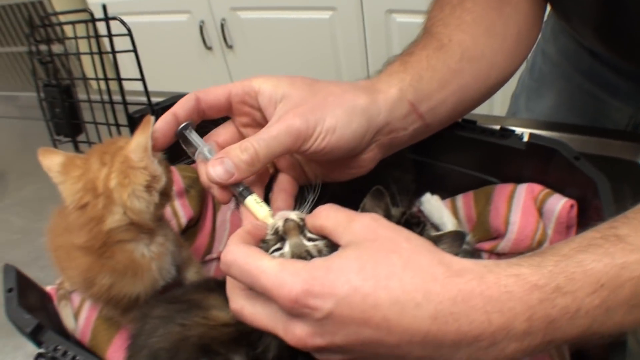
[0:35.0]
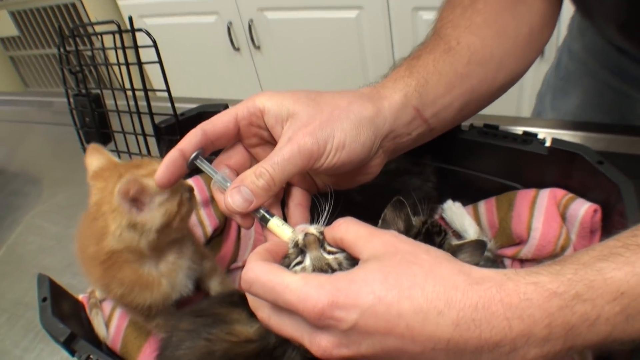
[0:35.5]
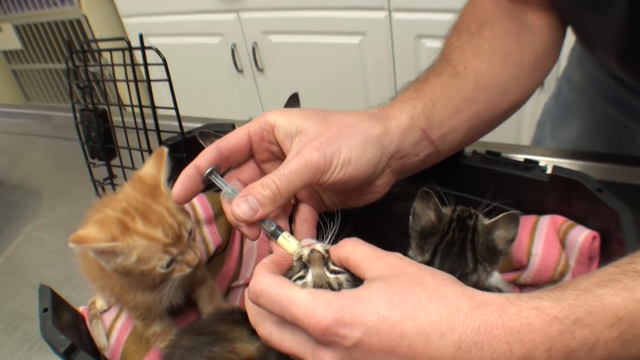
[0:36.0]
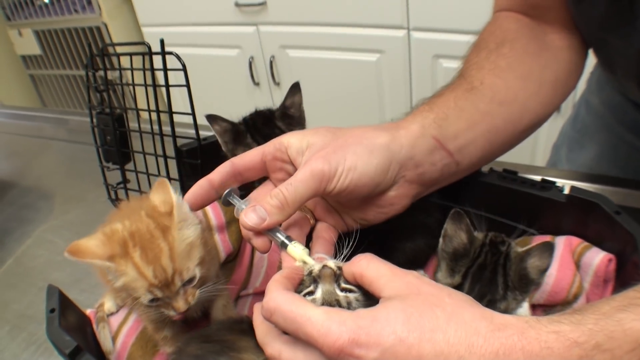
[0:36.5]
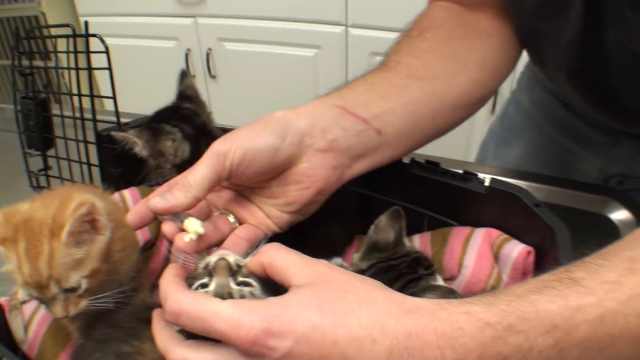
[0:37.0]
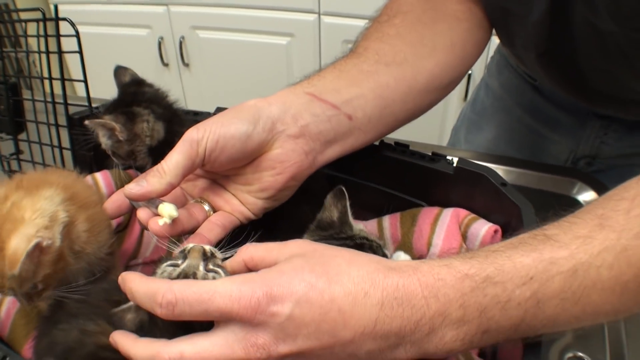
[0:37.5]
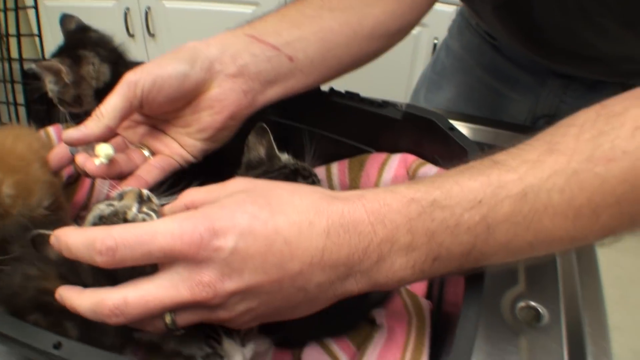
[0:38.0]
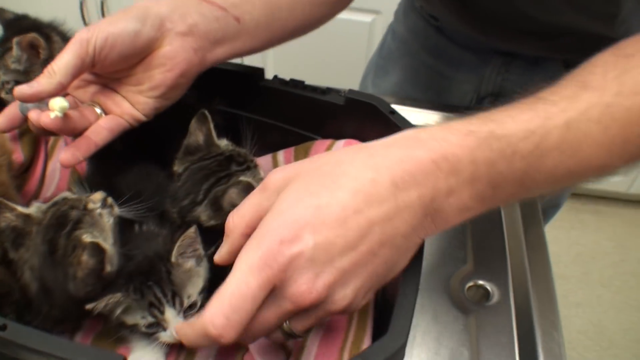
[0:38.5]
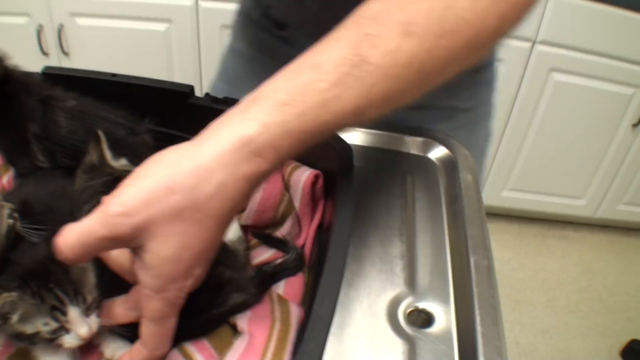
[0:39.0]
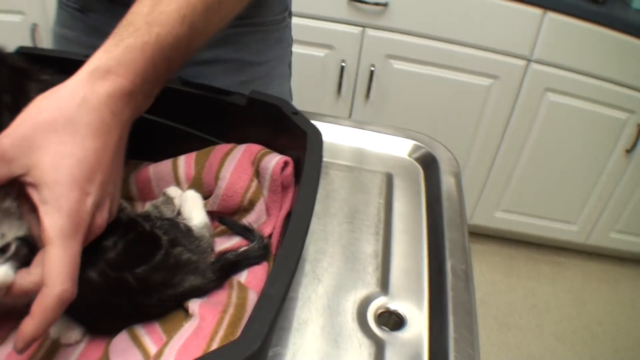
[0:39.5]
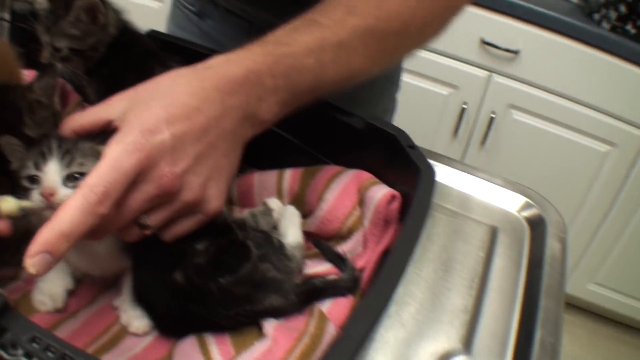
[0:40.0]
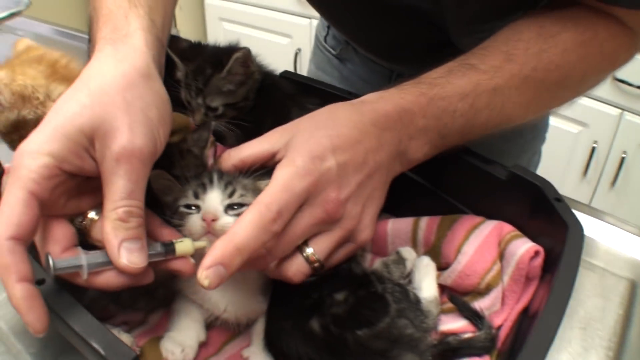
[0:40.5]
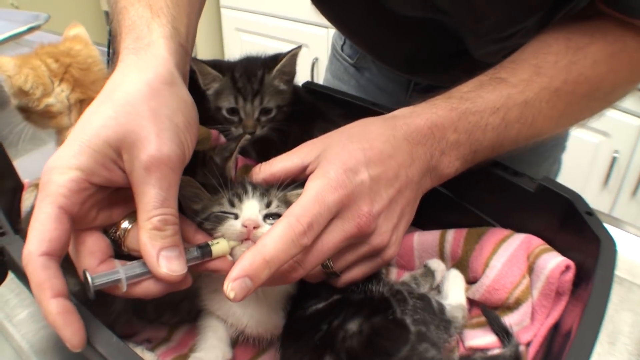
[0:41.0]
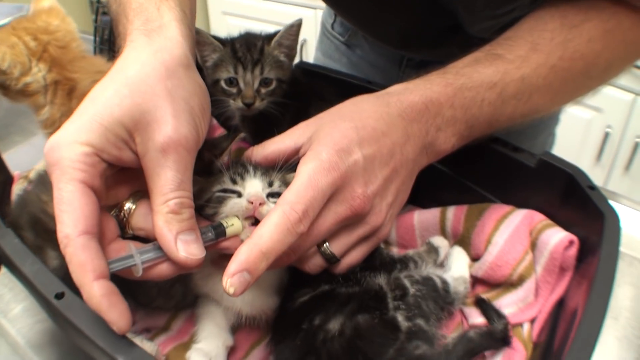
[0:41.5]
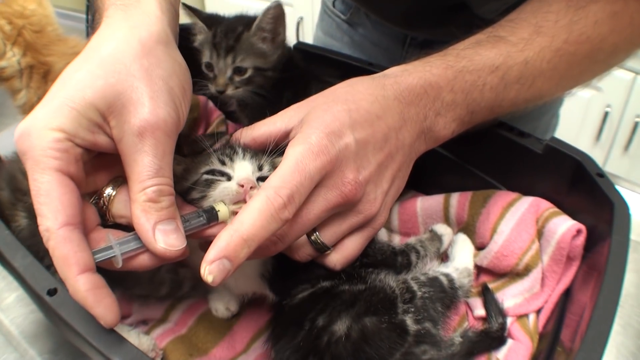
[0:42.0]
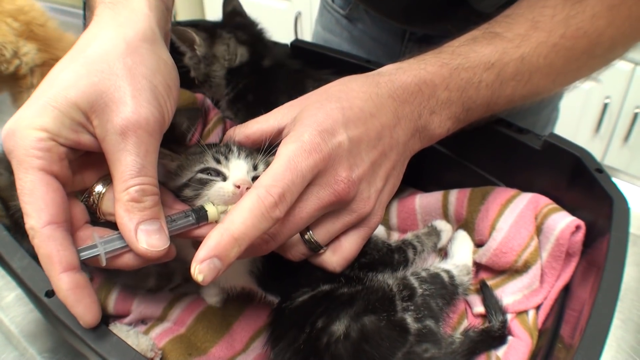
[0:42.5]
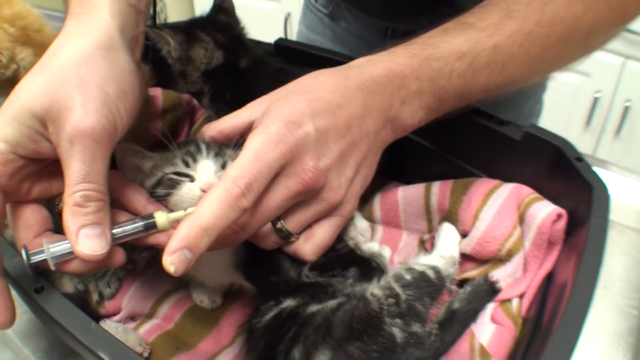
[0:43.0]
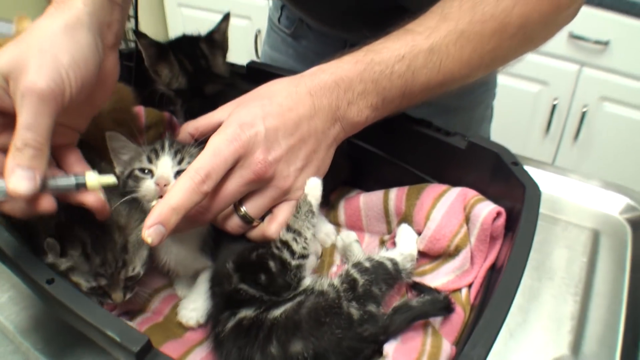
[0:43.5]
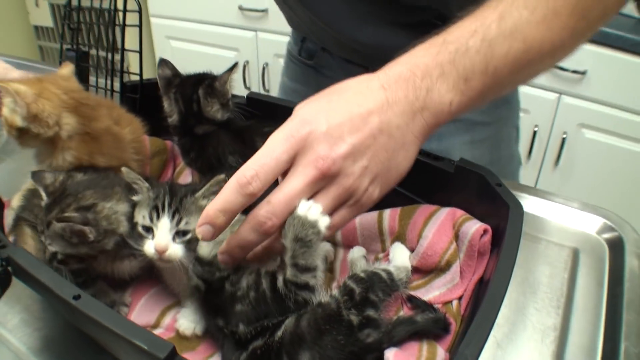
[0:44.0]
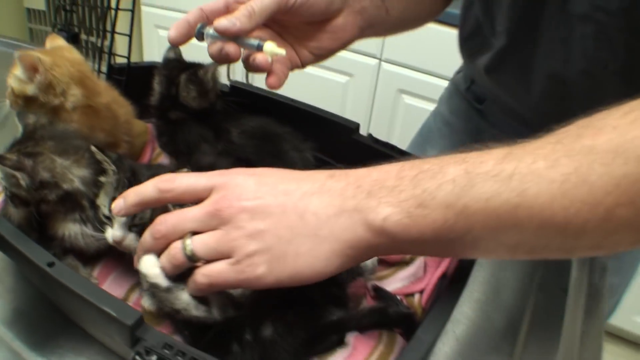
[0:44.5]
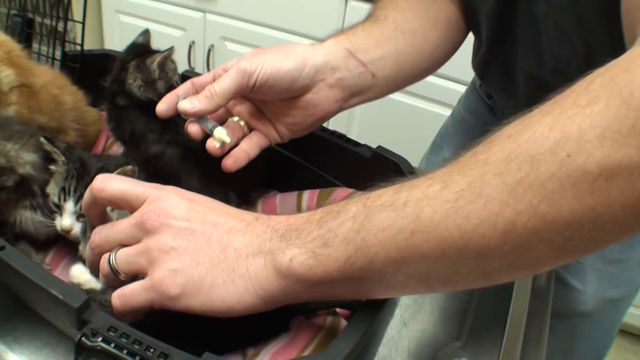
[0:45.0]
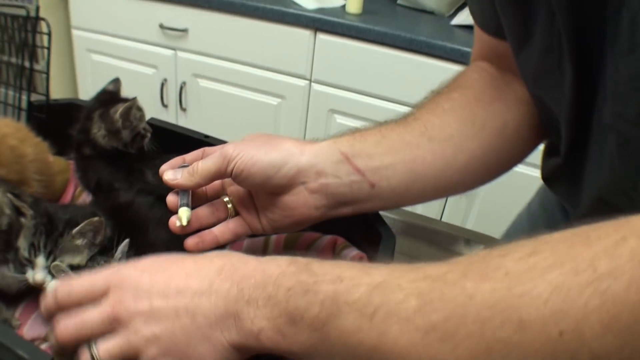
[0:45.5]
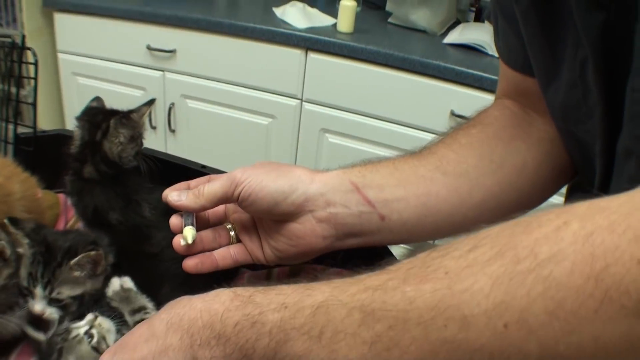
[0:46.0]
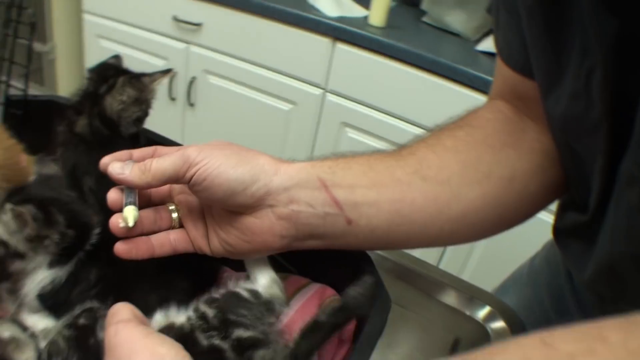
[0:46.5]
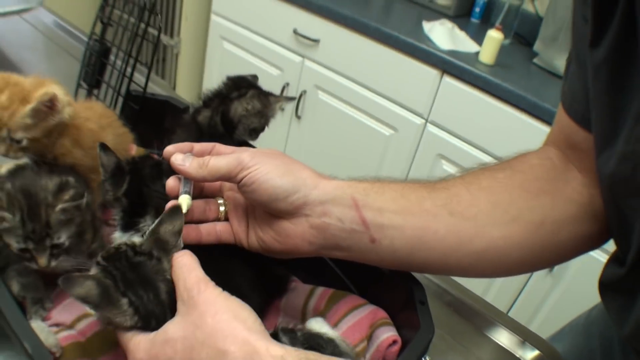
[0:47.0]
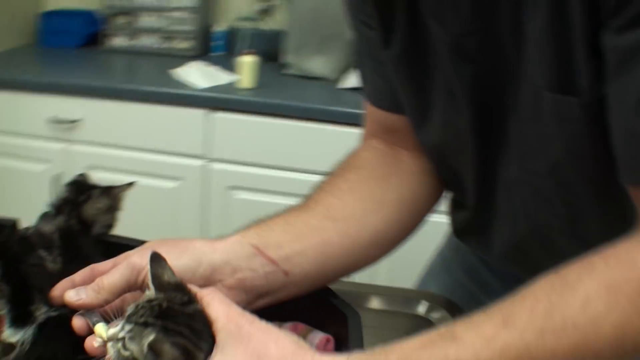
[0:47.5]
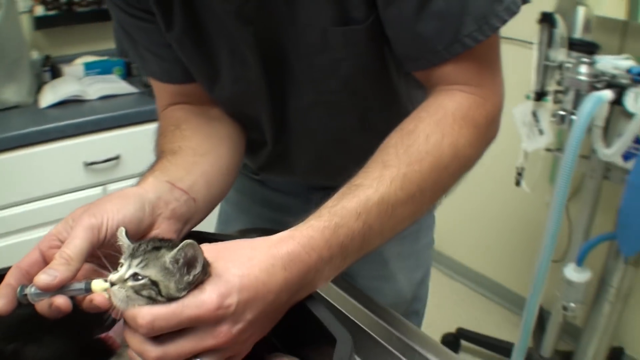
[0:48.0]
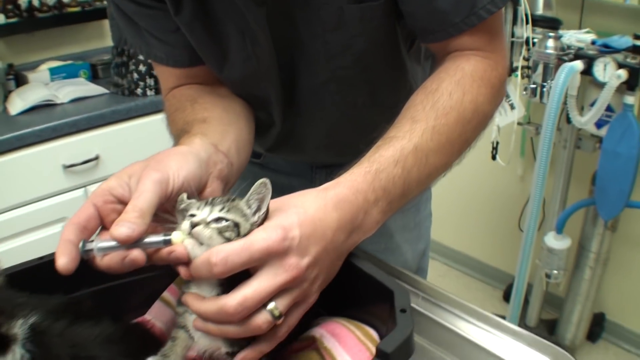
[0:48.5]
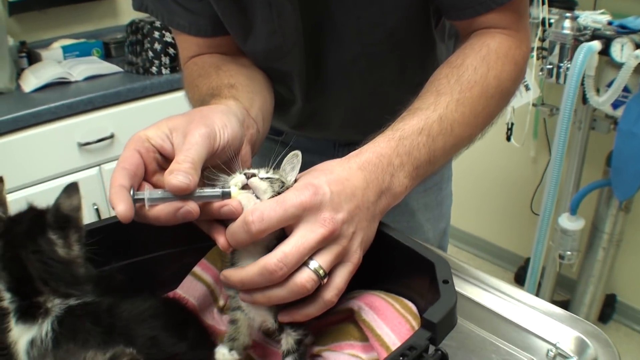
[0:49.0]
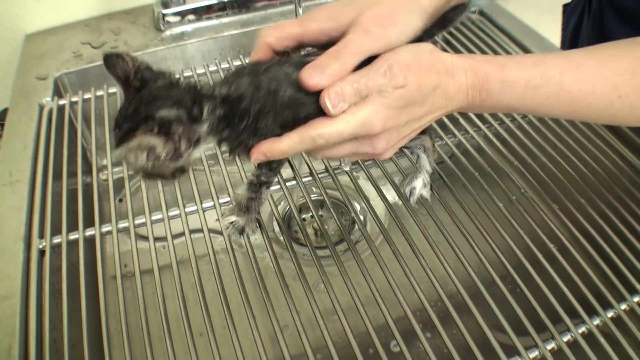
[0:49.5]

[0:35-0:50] The kittens are still getting medicine put in their mouths with the syringe, and they lick their mouths and each other's whiskers to get the medicine off. Some are now getting baths, and some walk around while they get their baths. One guy is still trying to distribute the medicine into their mouths. One little kitten is on a grating where the water can run through, getting a bath, while the others are still getting the medicine in their mouths. The kittens are squirmy.